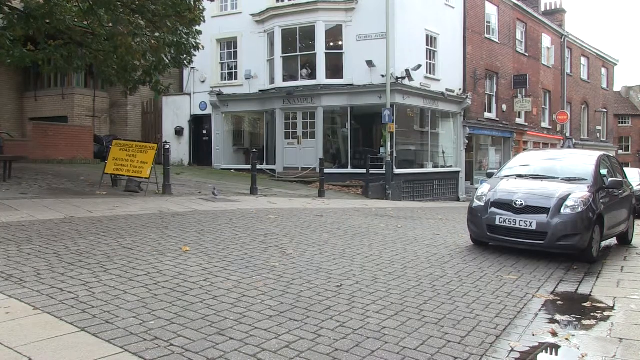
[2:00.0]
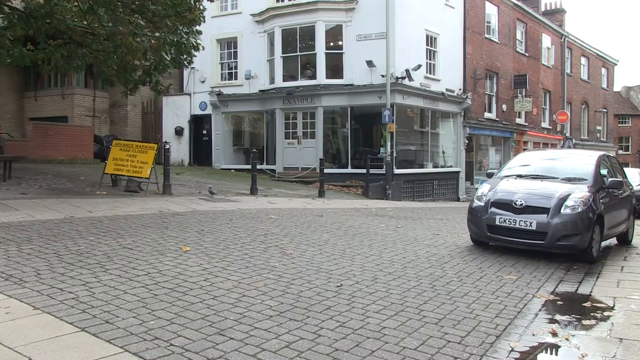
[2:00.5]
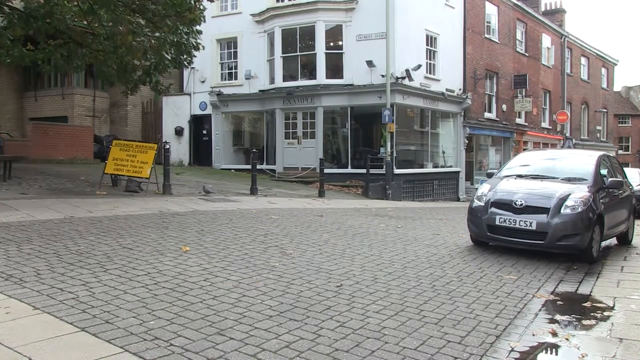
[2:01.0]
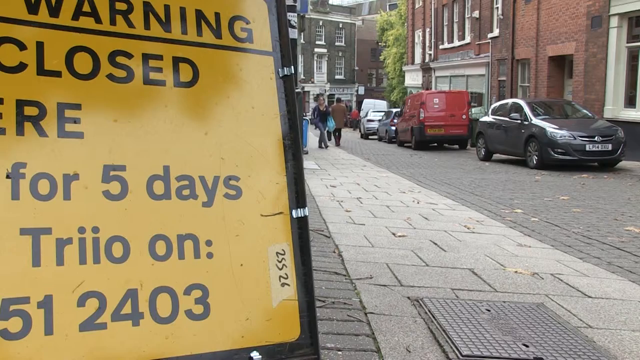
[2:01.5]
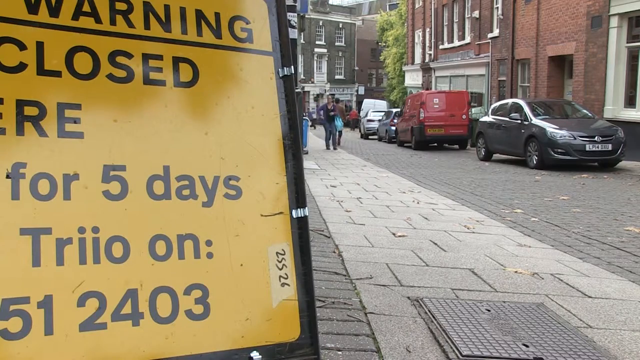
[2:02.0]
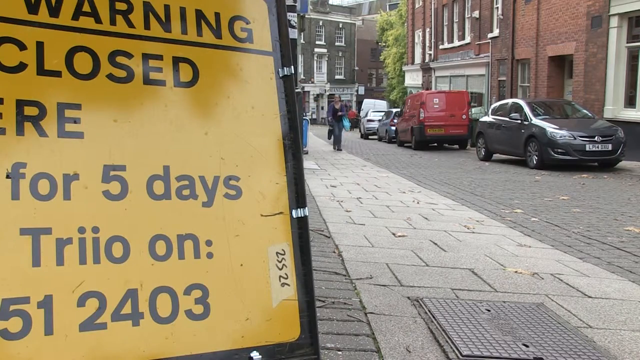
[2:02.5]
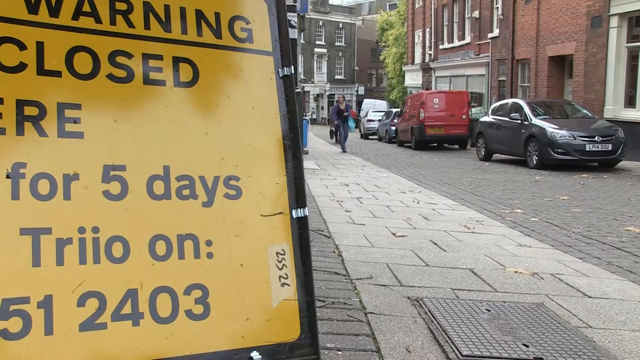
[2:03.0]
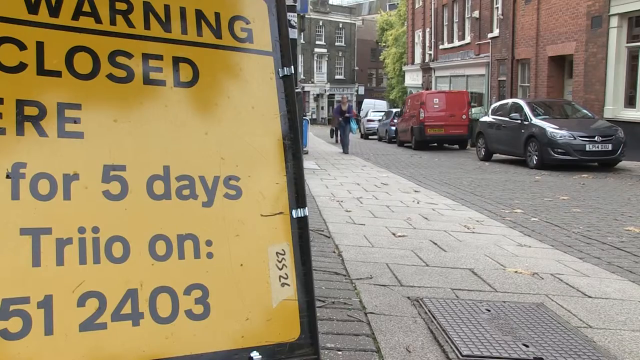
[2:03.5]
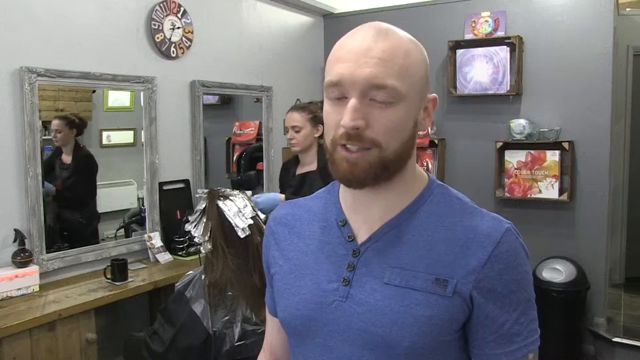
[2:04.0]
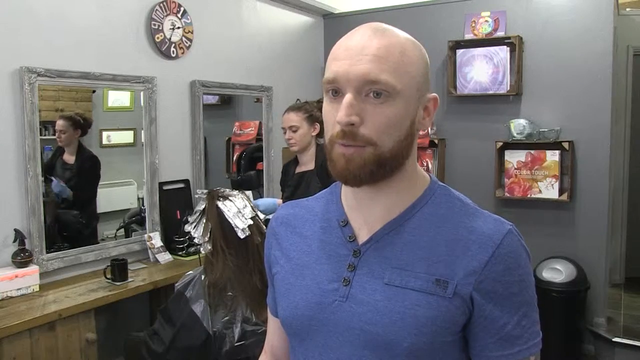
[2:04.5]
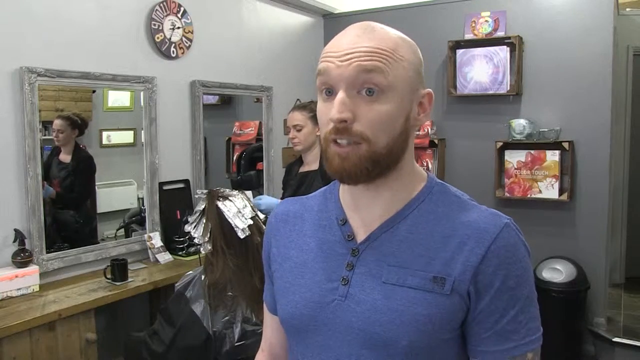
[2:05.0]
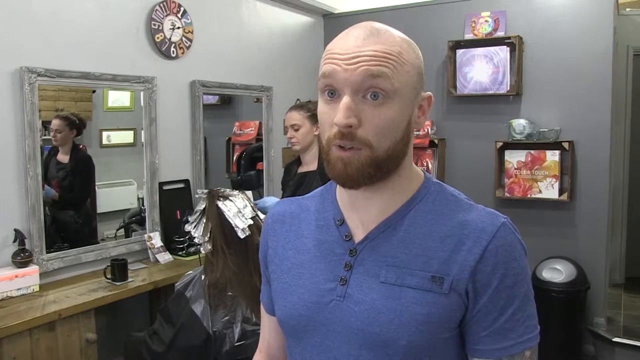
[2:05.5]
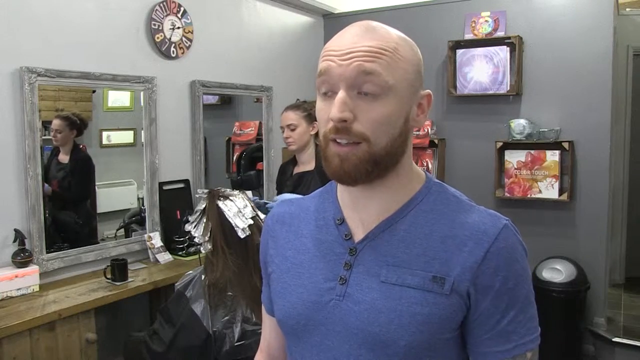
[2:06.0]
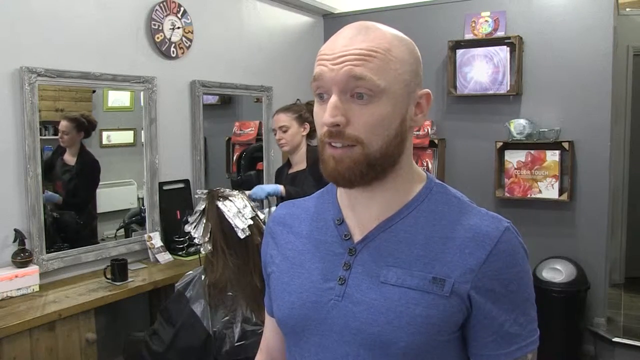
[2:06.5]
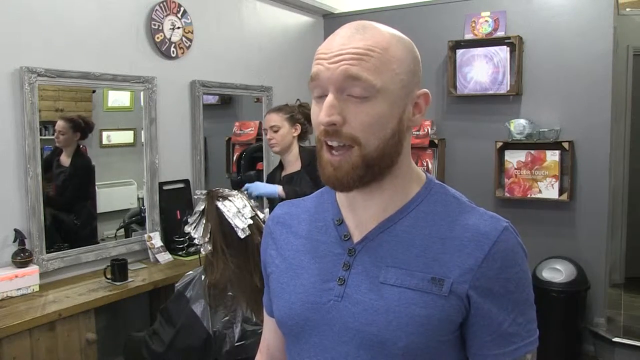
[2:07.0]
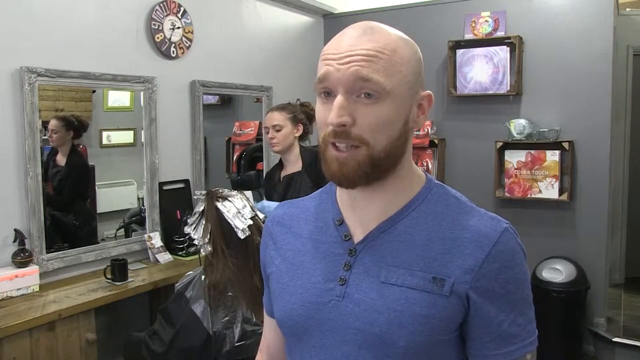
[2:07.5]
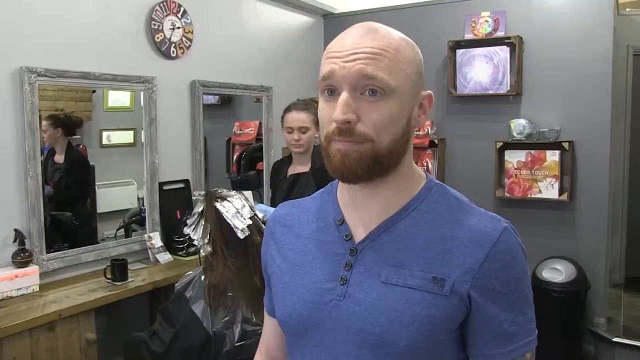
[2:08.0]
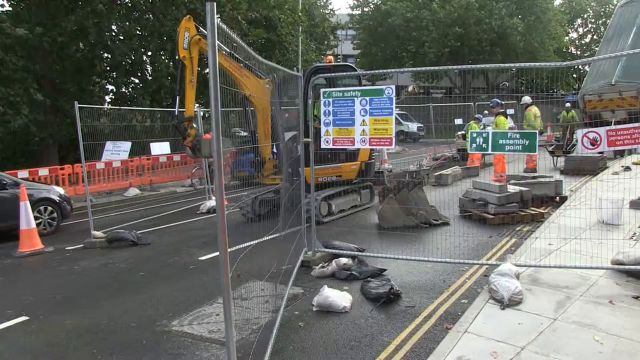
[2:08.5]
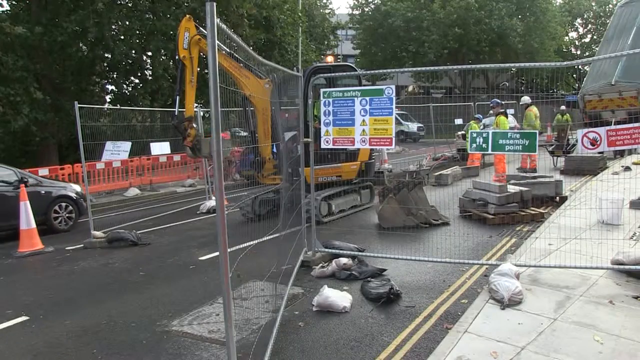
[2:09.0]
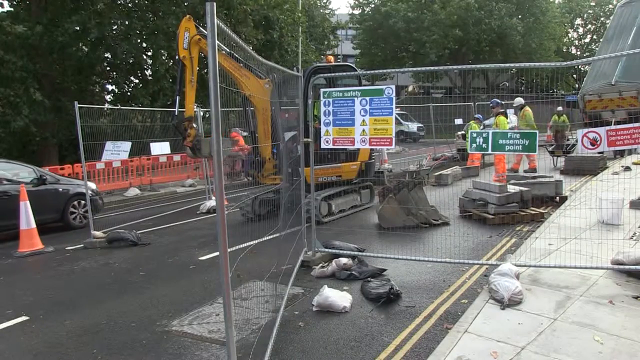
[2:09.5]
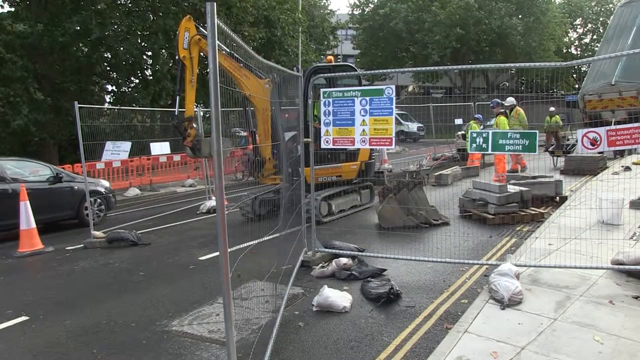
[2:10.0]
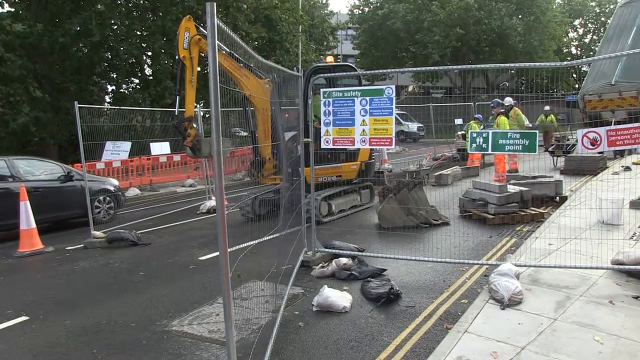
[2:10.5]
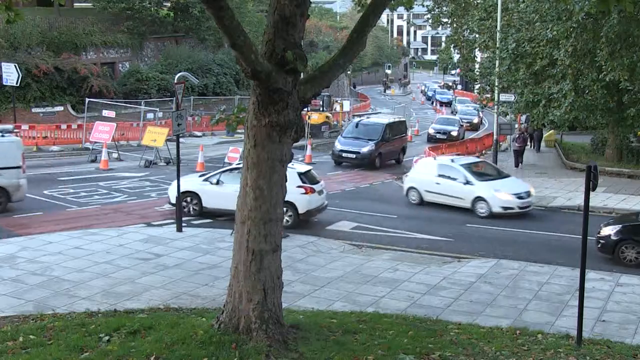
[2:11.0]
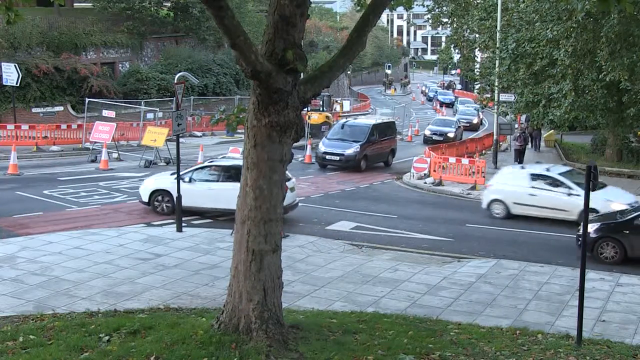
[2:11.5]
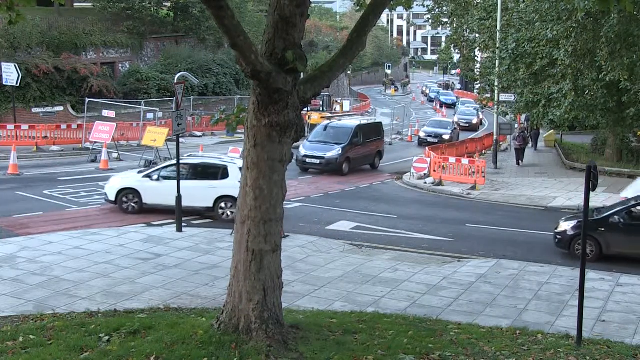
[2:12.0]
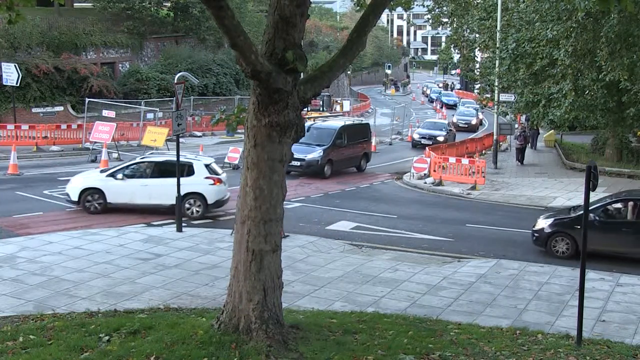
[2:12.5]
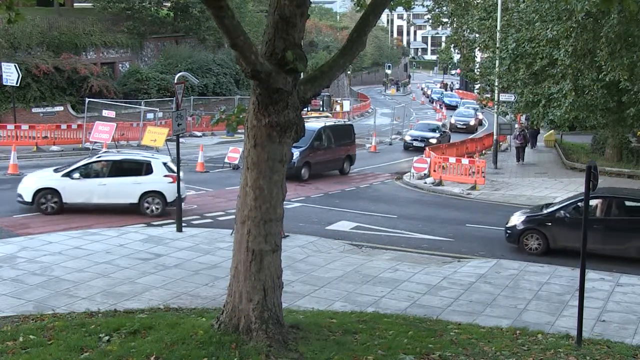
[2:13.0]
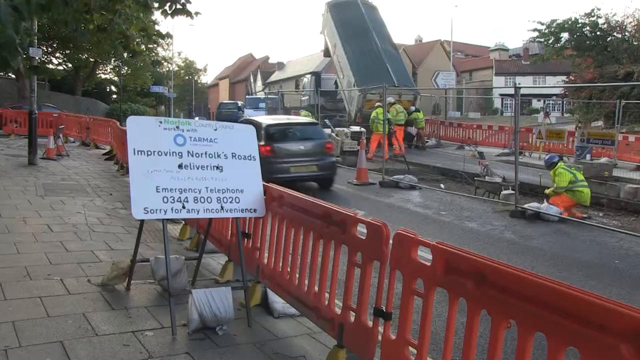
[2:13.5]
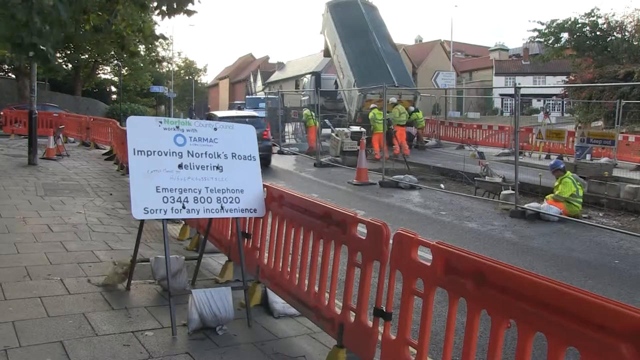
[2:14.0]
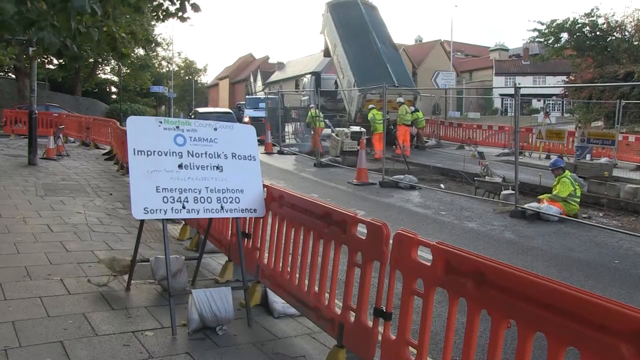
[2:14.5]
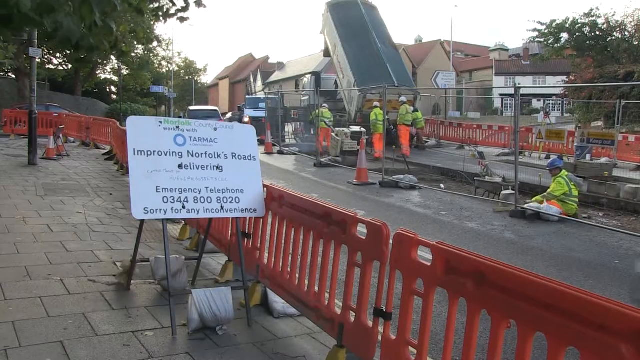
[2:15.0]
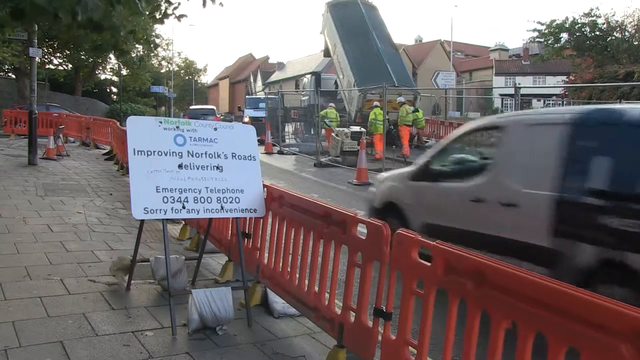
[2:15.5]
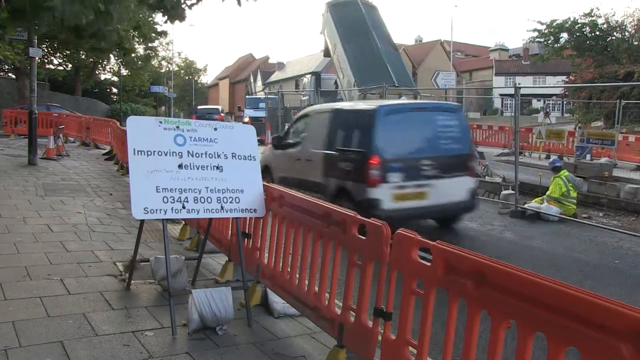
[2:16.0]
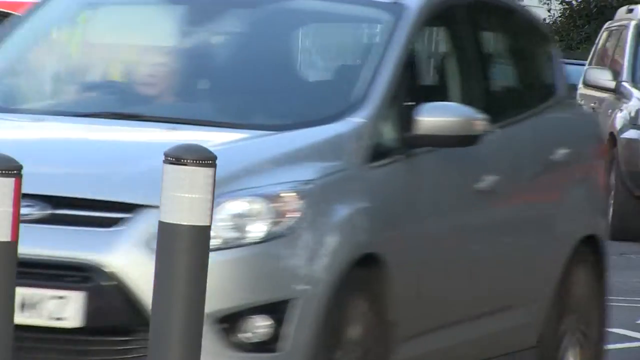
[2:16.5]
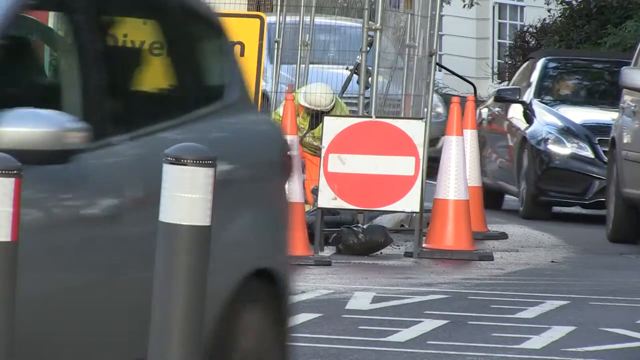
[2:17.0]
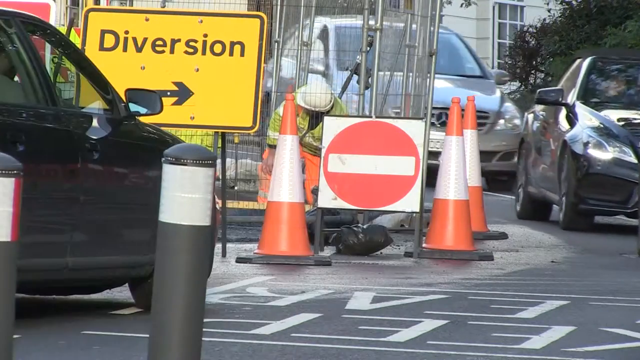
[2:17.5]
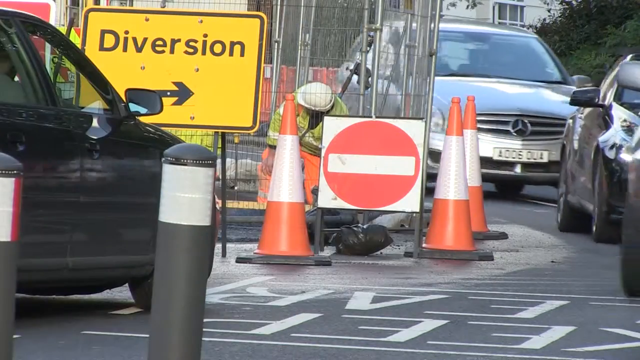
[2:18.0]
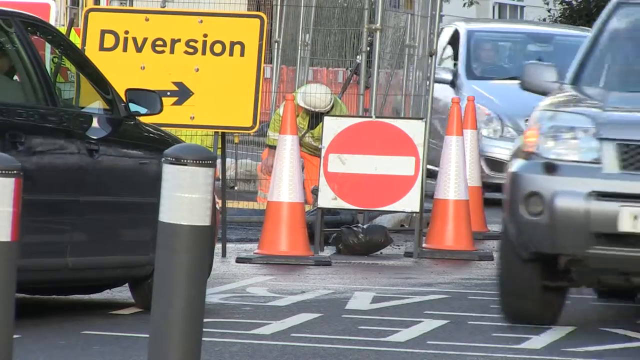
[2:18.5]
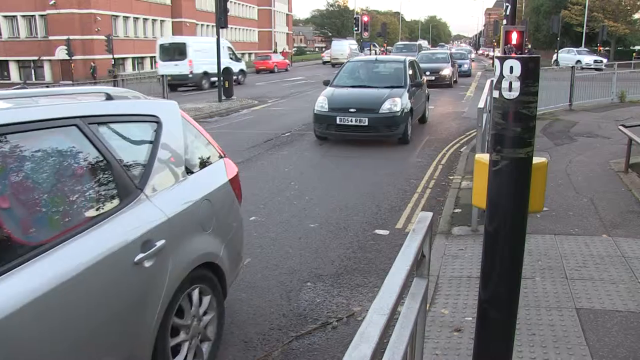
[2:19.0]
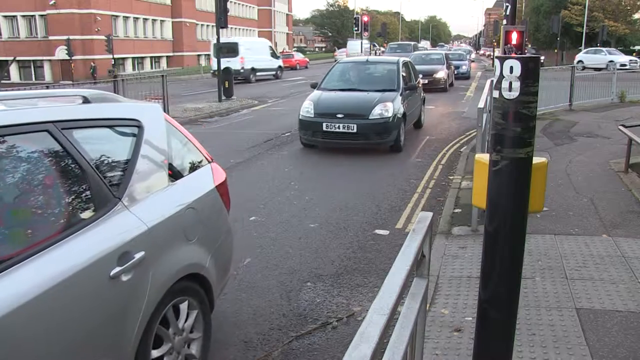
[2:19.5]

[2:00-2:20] Aaron is shown back in the hair salon with the women still visible in the background. The camera then moves to the road works outside, where there is a tractor and workmen busy fixing the road. The road is closed for repair, with notices issued. The demarcations of the road are shown as motorists try to use a different path. A road sign gives an emergency telephone number and apologises to road users for the inconvenience during the road works. Demarcations show the diversion routes, and a sign written in black on a yellow plate shows the alternative routes motorists can use to avoid the road closures.